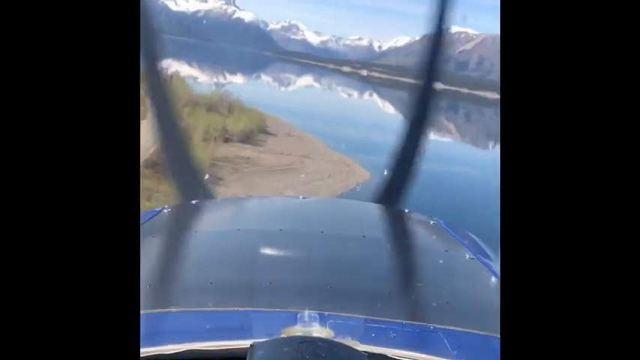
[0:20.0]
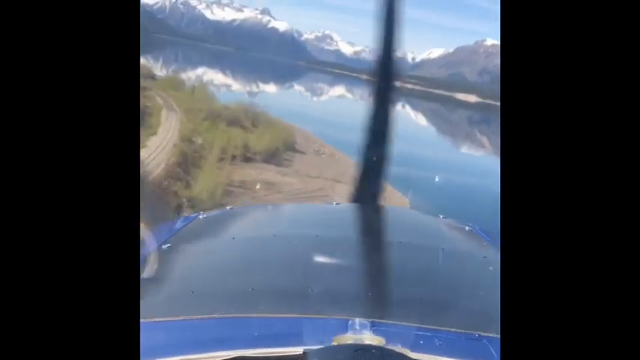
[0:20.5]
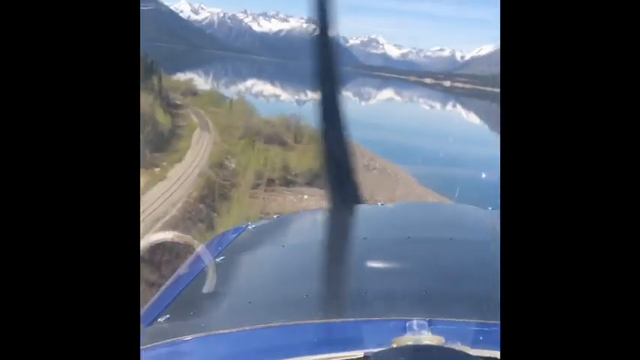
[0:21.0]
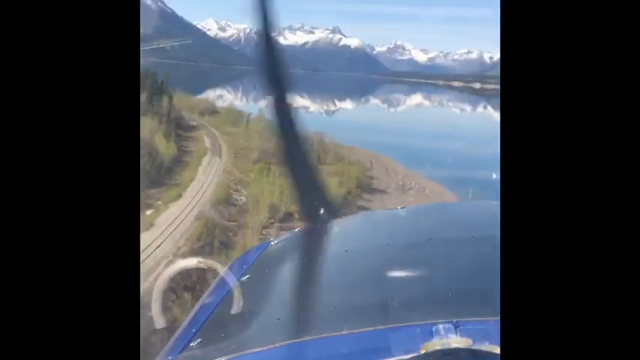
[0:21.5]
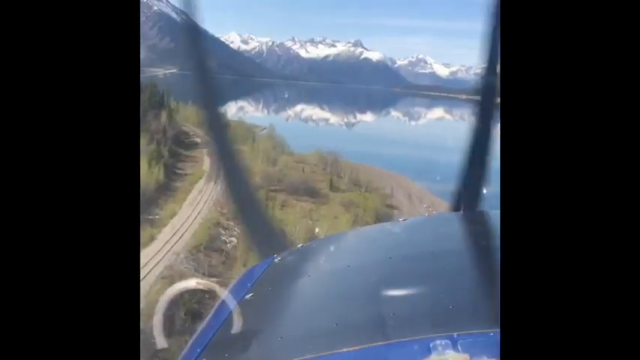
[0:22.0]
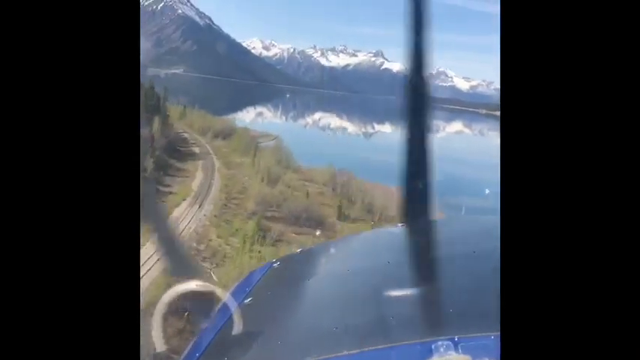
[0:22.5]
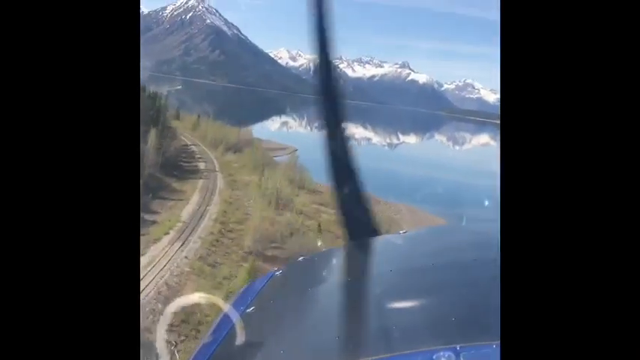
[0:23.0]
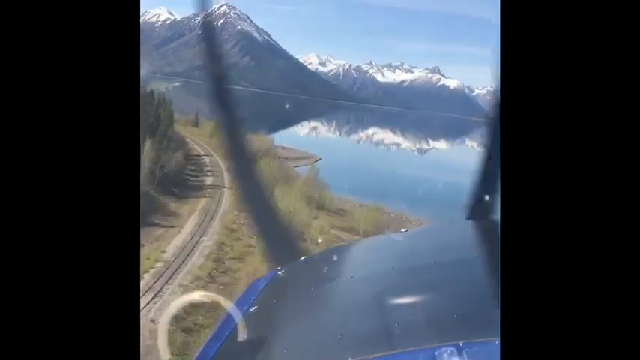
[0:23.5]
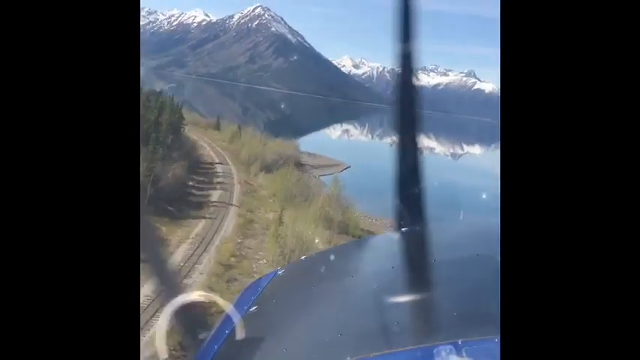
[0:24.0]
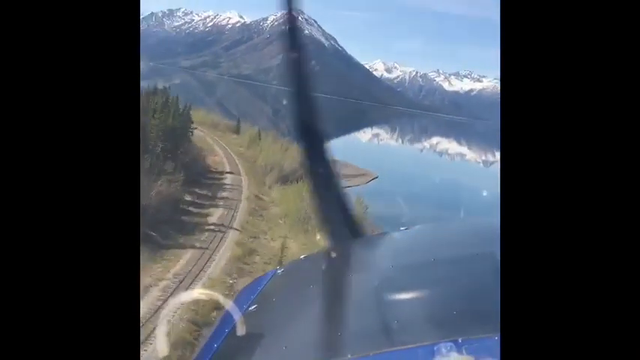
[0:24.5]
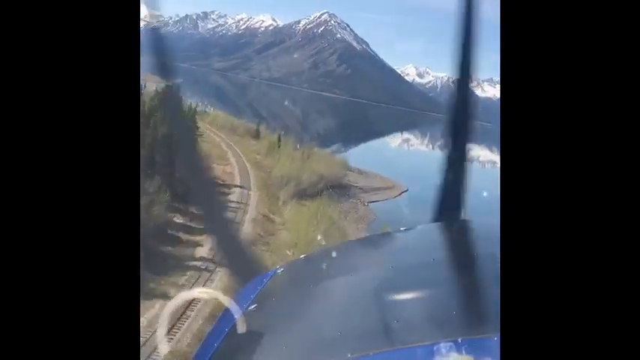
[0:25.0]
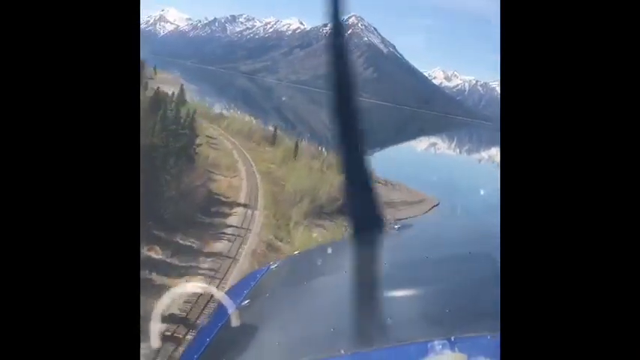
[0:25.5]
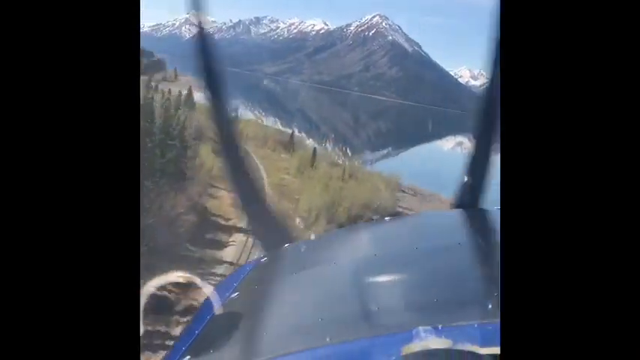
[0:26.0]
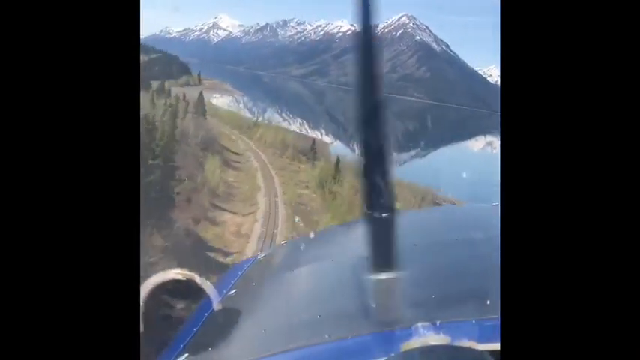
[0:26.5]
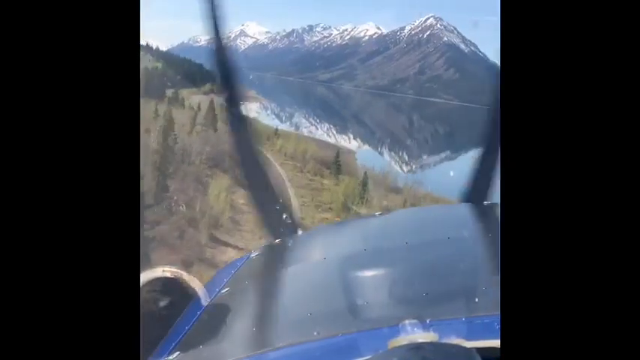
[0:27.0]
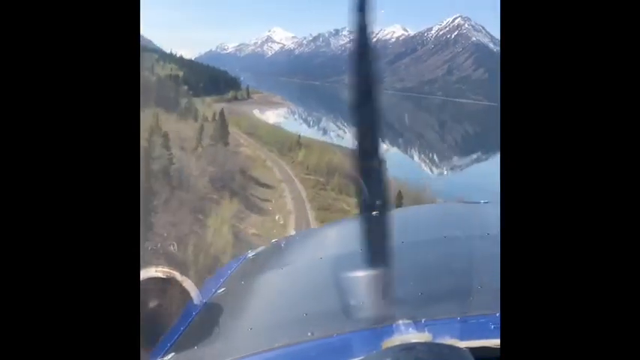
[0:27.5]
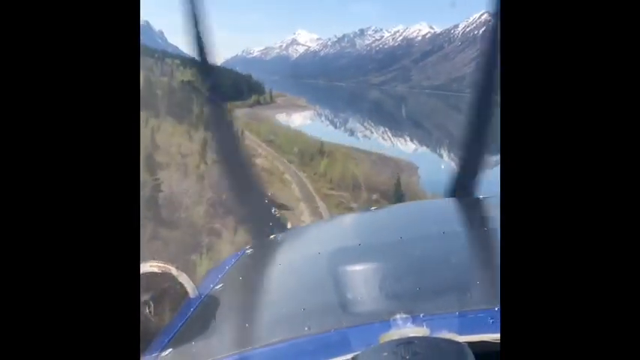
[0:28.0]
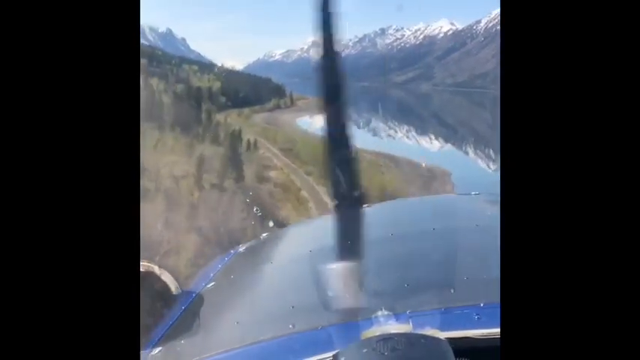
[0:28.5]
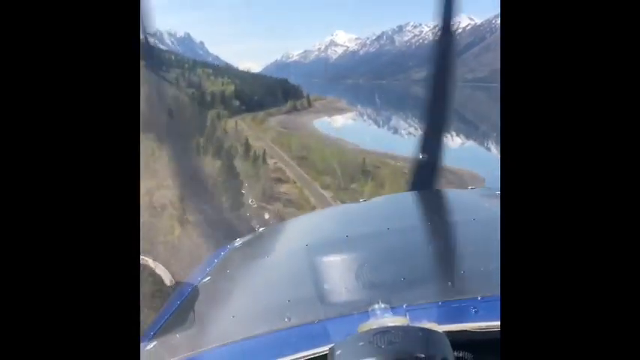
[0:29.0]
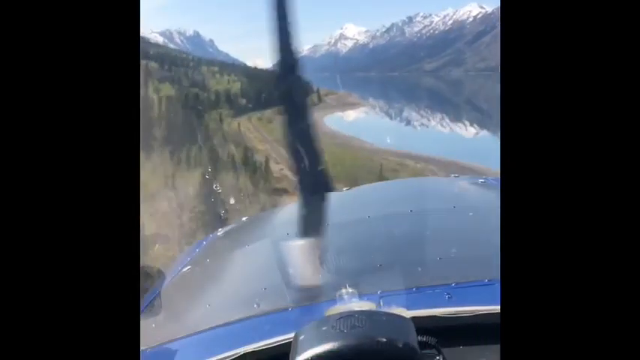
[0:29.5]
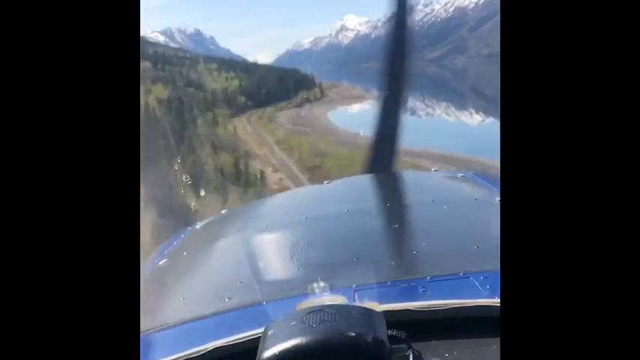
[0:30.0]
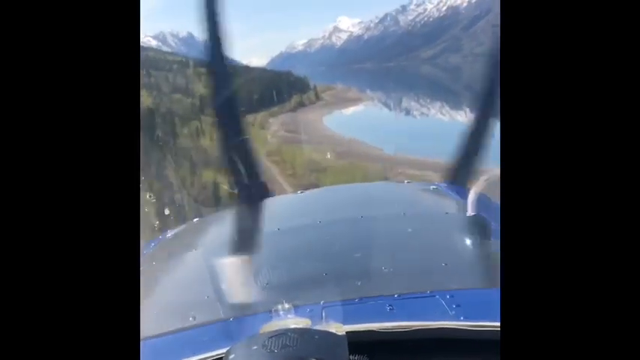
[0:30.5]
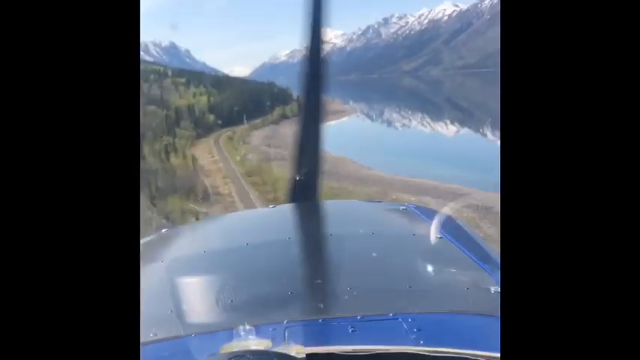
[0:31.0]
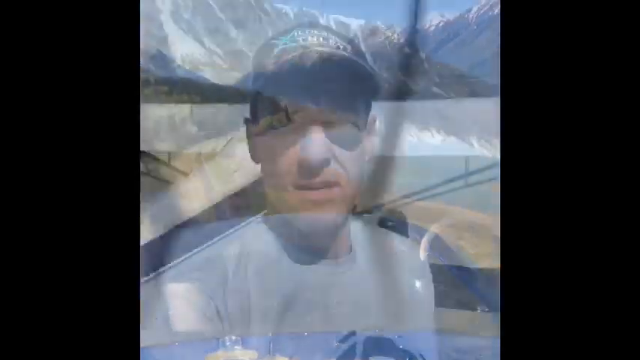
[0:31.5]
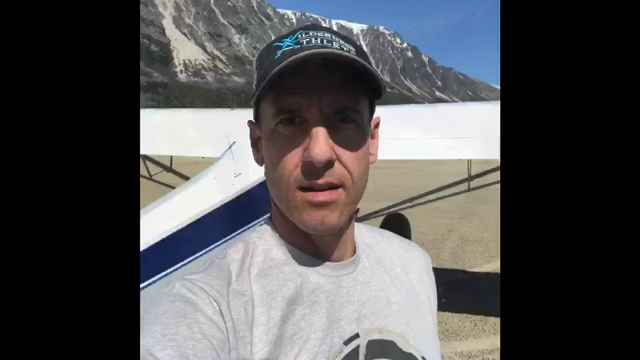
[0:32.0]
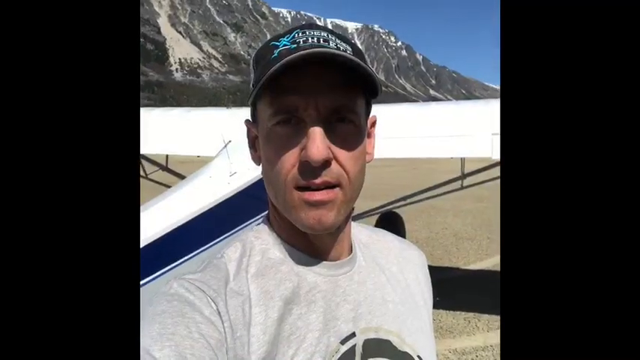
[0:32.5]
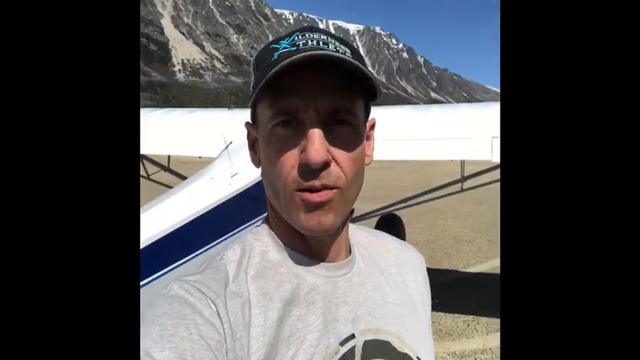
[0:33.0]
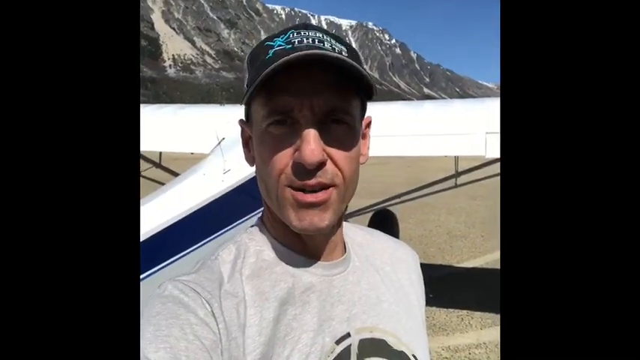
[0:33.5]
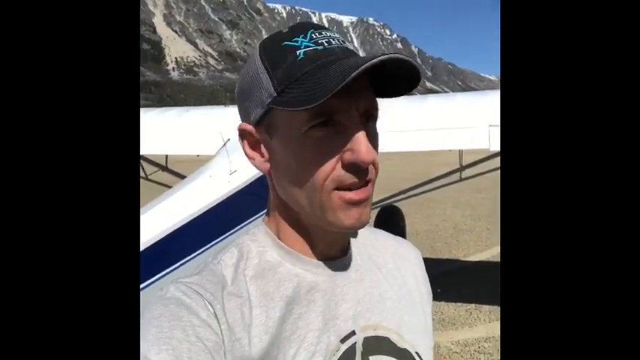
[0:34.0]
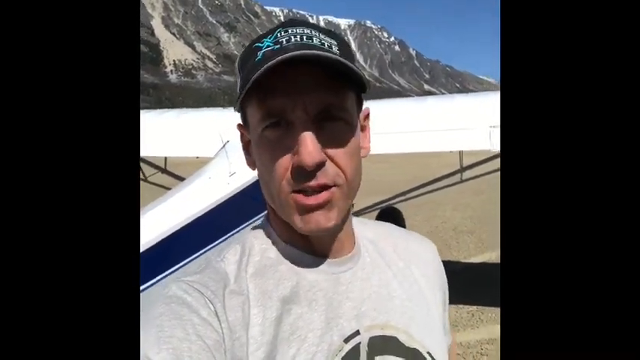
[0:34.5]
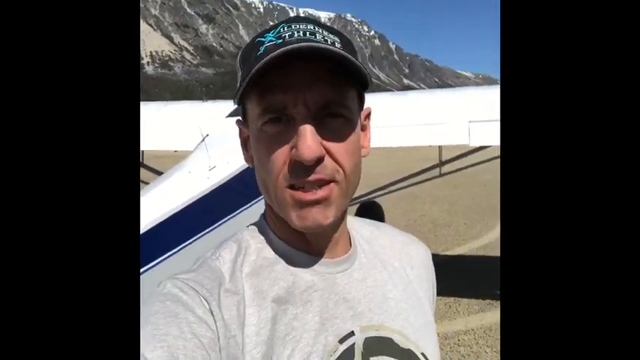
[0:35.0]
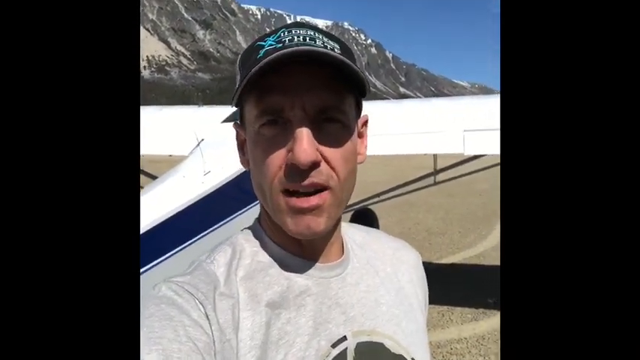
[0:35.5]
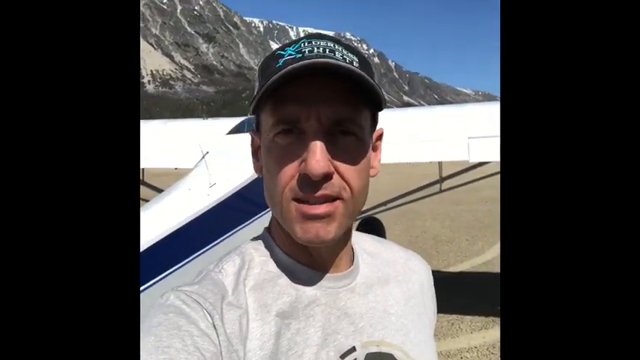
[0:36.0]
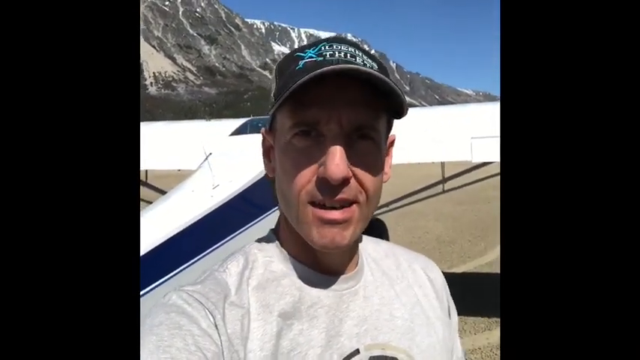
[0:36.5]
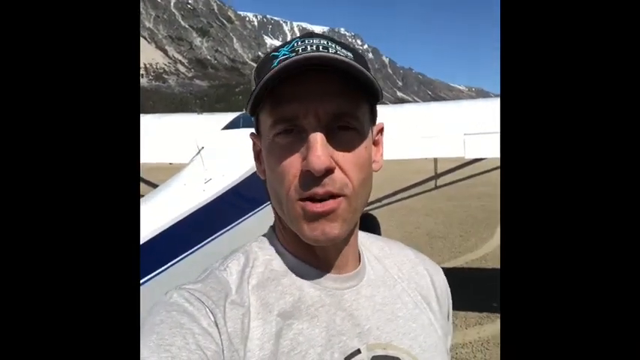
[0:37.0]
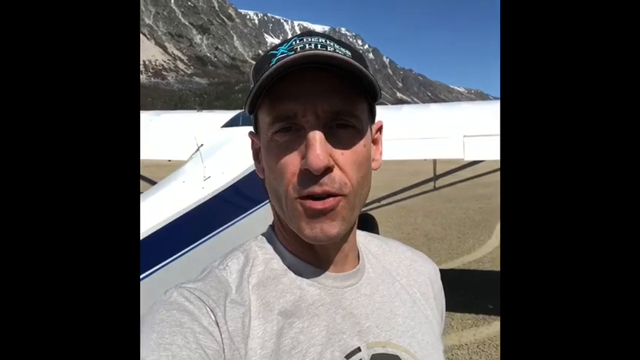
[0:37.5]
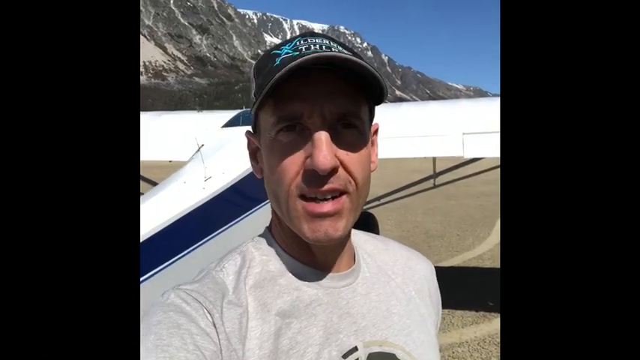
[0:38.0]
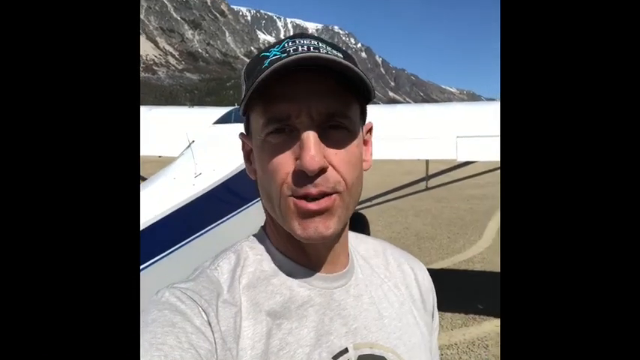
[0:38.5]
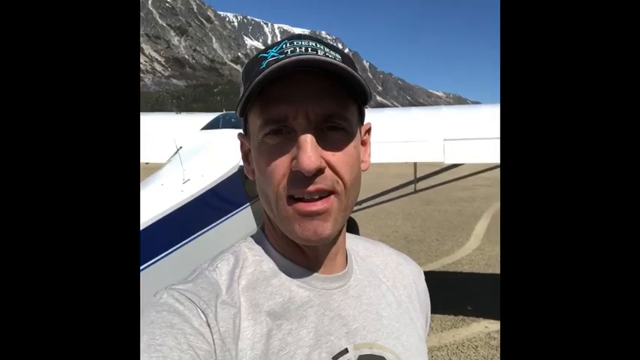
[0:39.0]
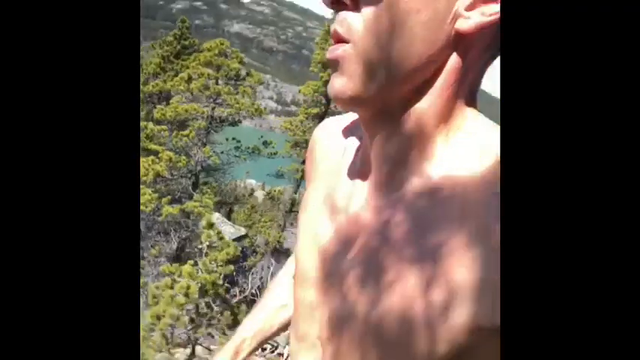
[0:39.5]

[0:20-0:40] The view is from inside the cockpit of the plane, with the gray front of the plane on the lower part of the screen and a propeller continuously spinning clockwise in front of the view. The plane flies over a dirt road to the left. Straight ahead is a lake, still like a mirror with no ripples, reflecting snow-capped mountains along the skyline. The camera turns slightly left to follow the road beside the lake; as it turns, the lake moves off the screen and a forest appears on the right-hand side. The view cuts to a man speaking who looks as though he is filming with his camera, his left arm held forward. Behind him are a white structure of a plane and a snow-capped mountain in the background. He tilts his body slightly toward the left before the view fades out.